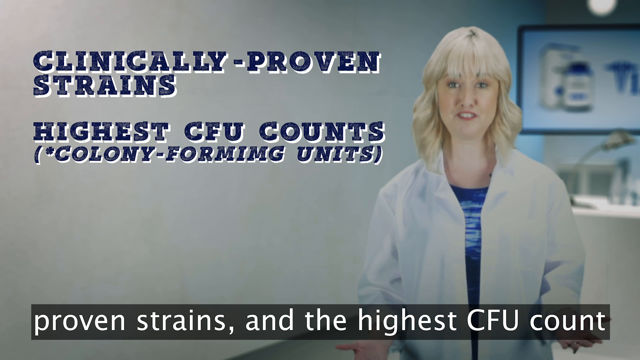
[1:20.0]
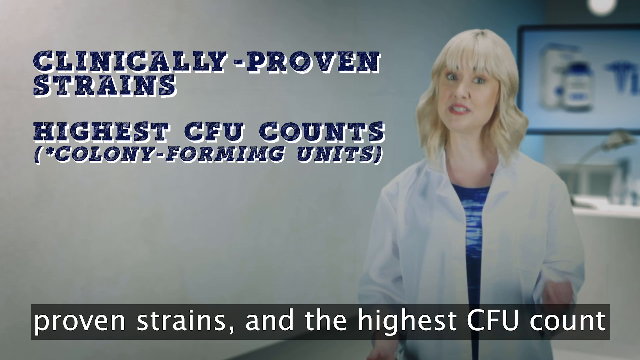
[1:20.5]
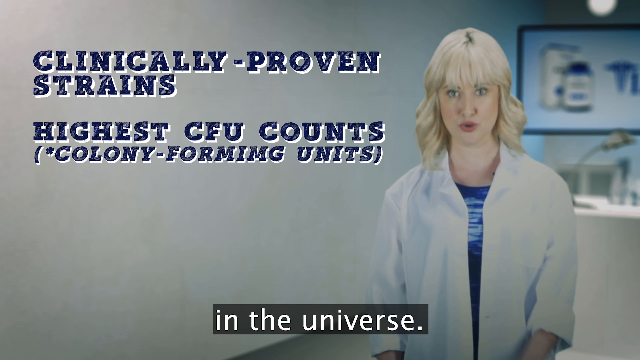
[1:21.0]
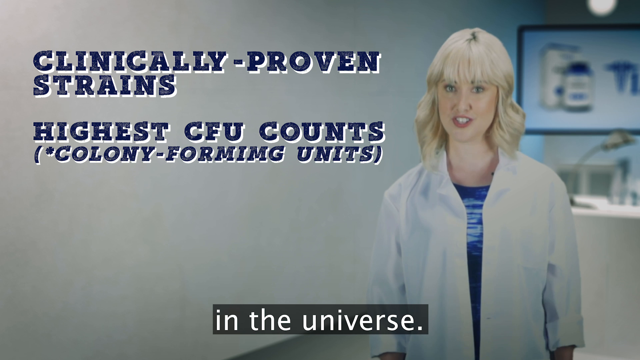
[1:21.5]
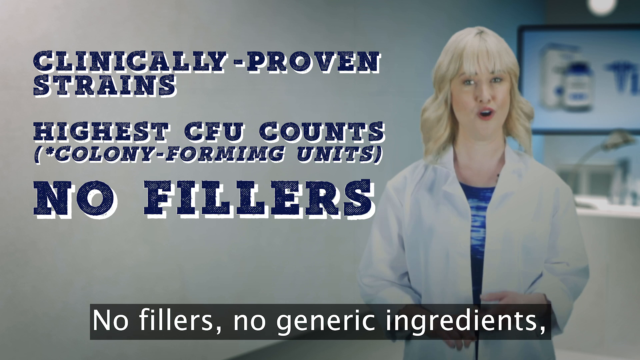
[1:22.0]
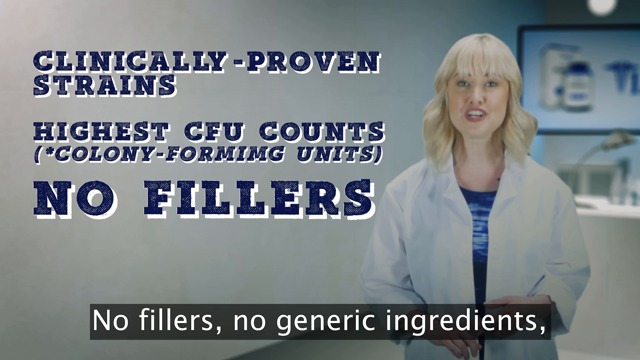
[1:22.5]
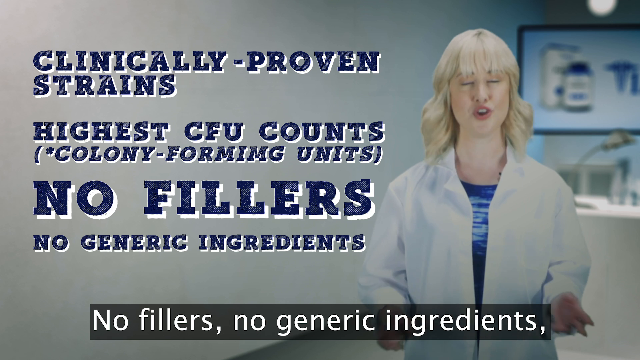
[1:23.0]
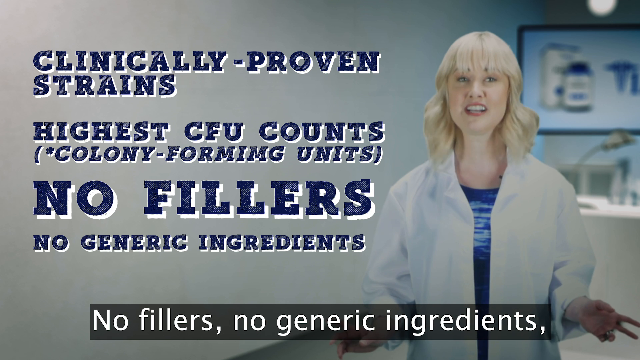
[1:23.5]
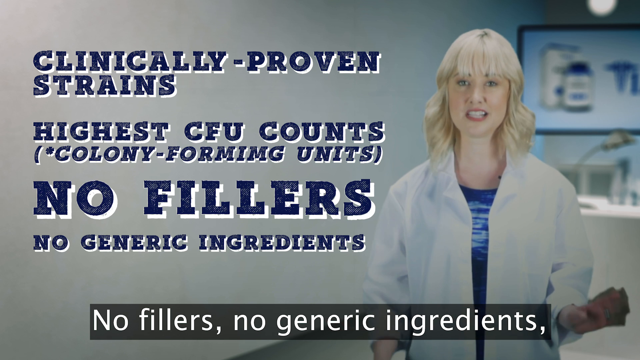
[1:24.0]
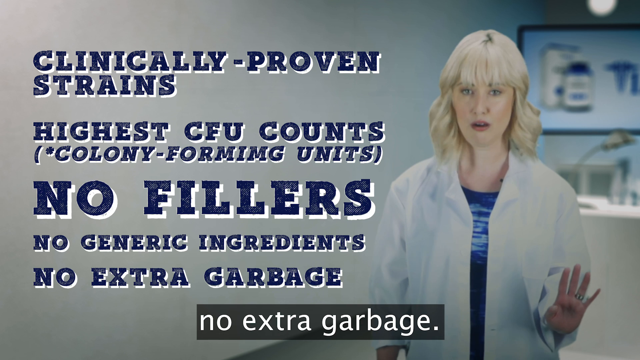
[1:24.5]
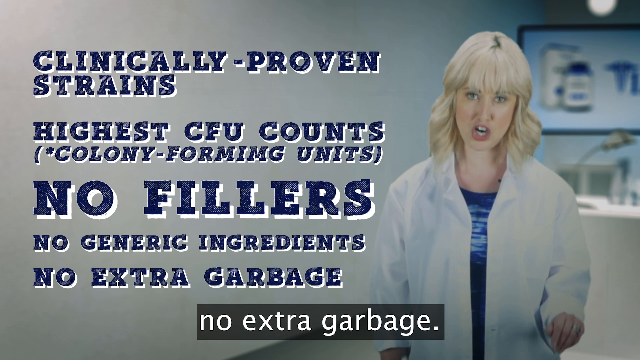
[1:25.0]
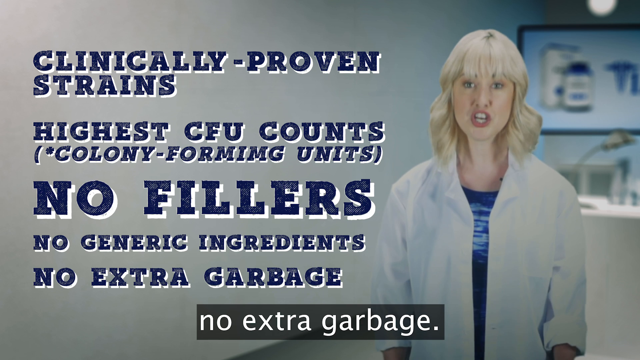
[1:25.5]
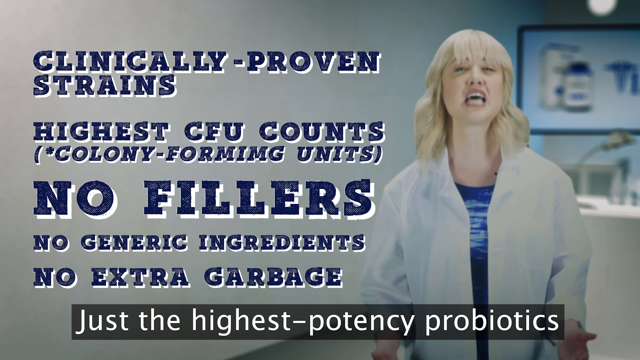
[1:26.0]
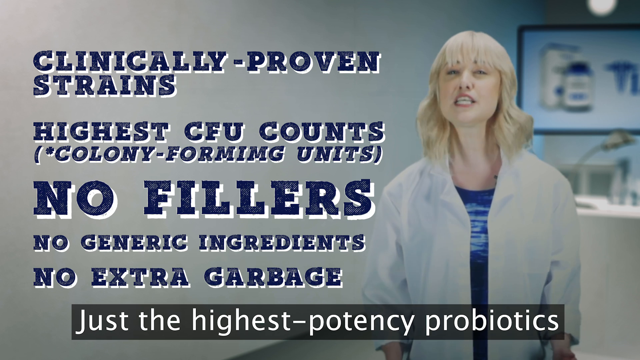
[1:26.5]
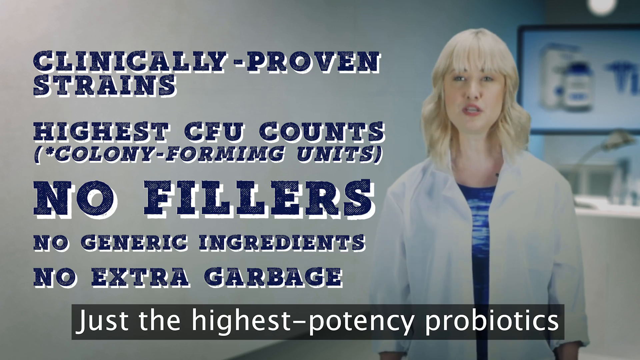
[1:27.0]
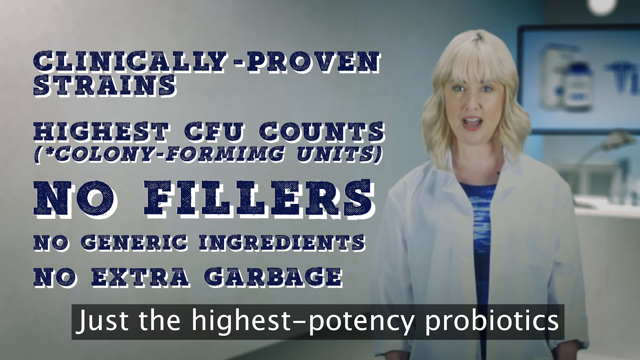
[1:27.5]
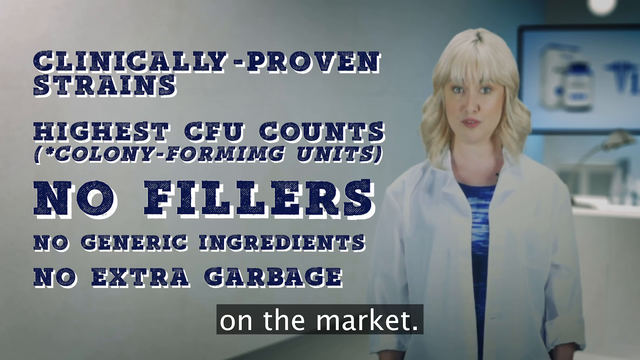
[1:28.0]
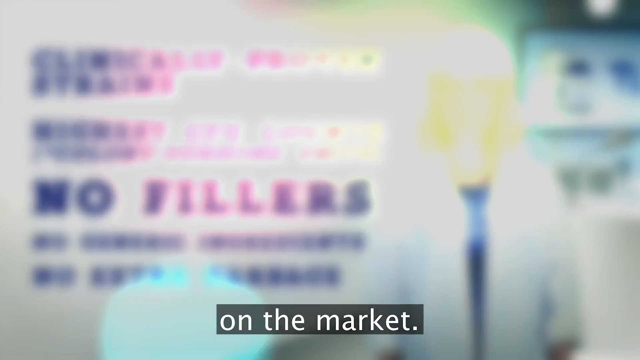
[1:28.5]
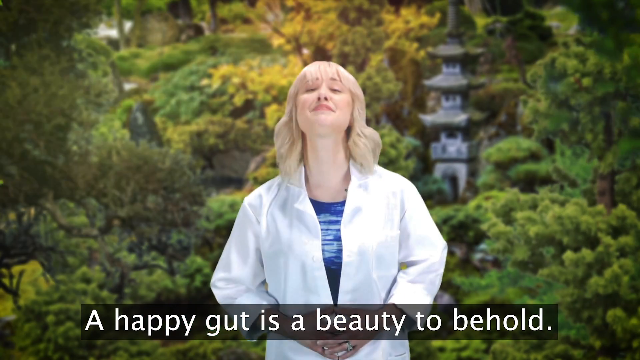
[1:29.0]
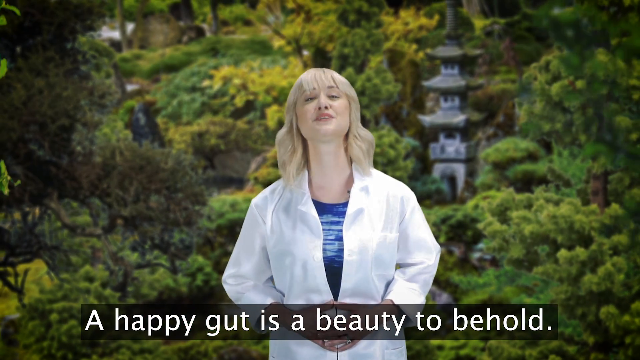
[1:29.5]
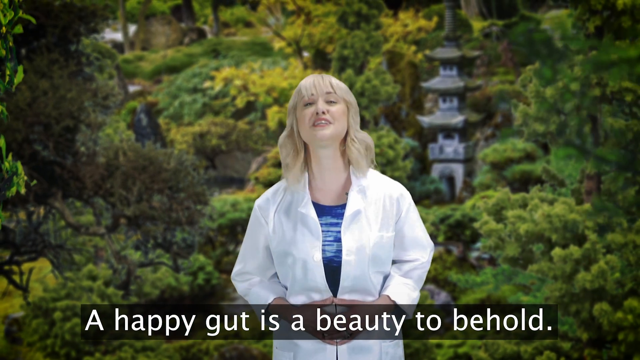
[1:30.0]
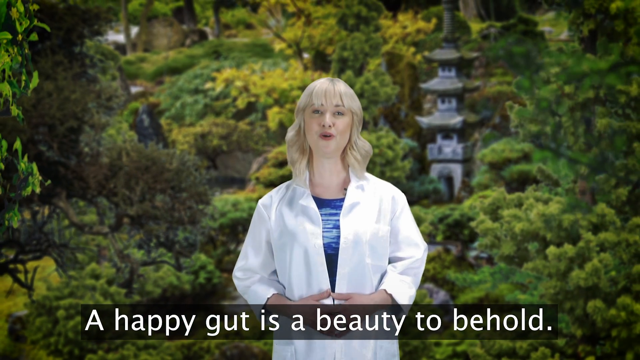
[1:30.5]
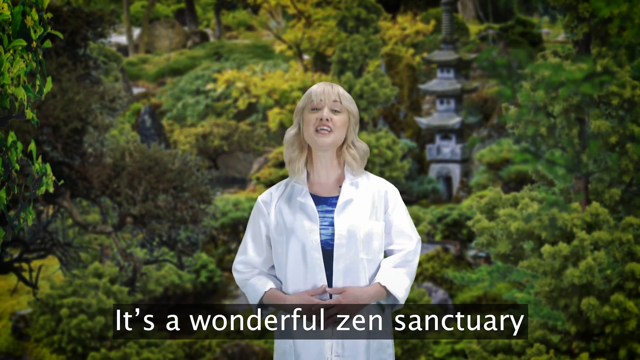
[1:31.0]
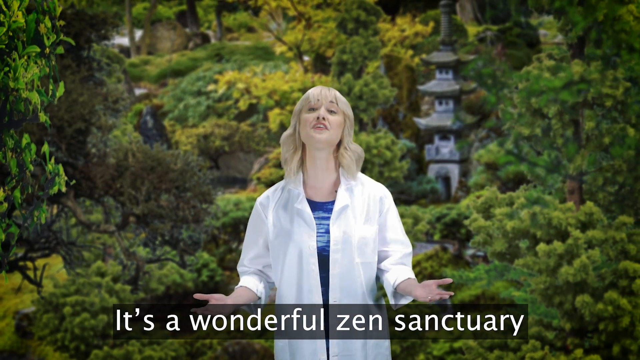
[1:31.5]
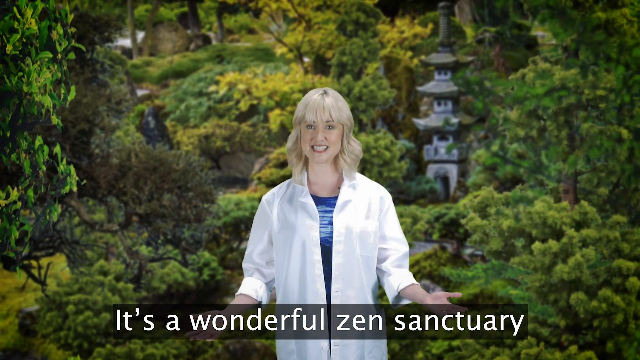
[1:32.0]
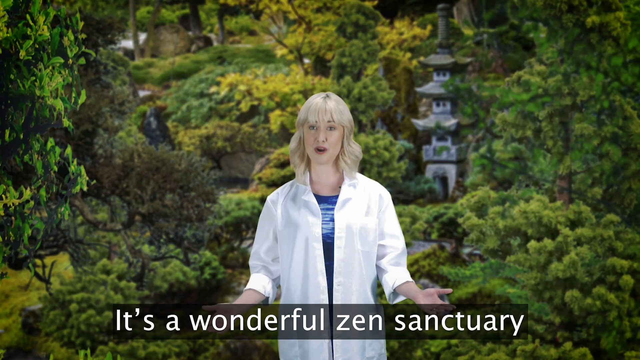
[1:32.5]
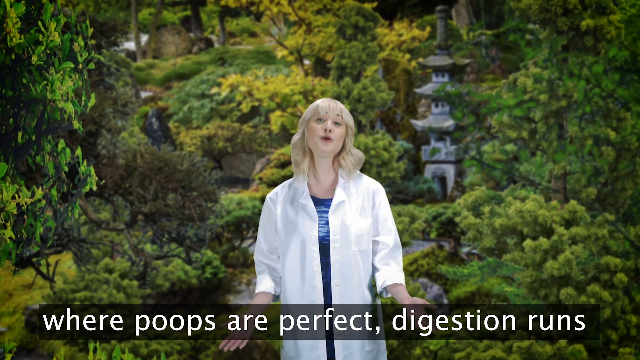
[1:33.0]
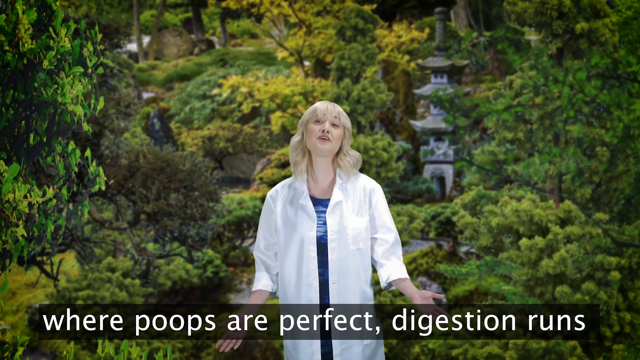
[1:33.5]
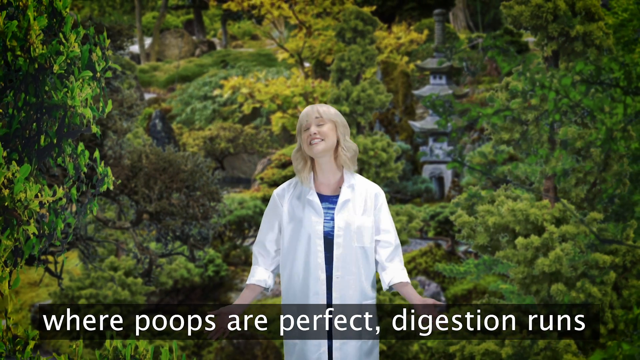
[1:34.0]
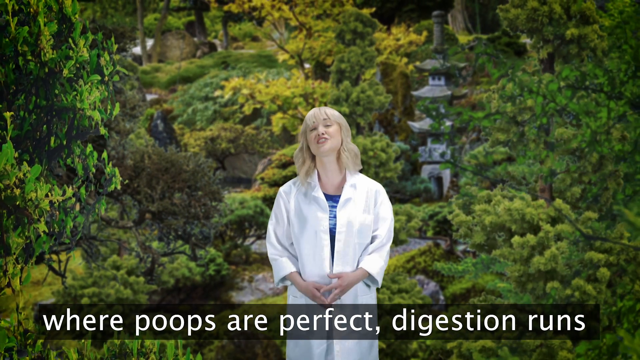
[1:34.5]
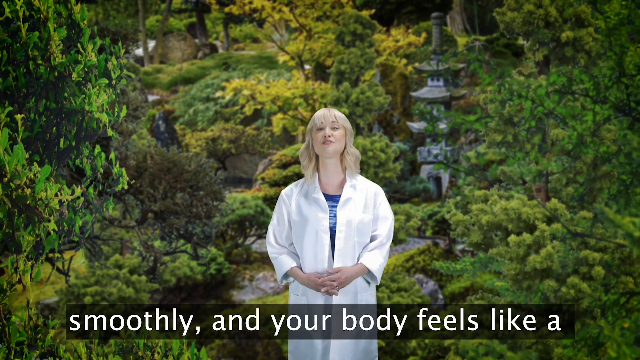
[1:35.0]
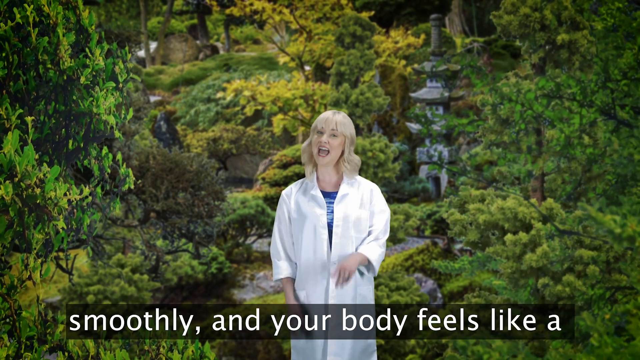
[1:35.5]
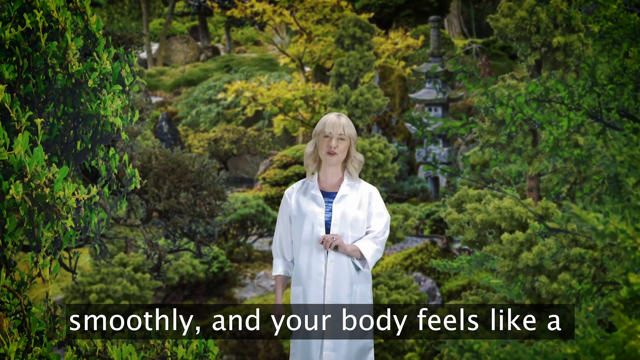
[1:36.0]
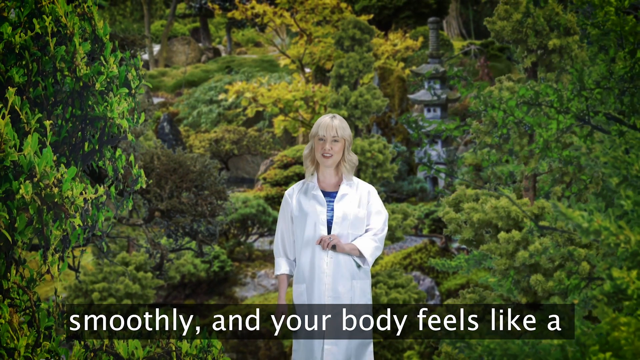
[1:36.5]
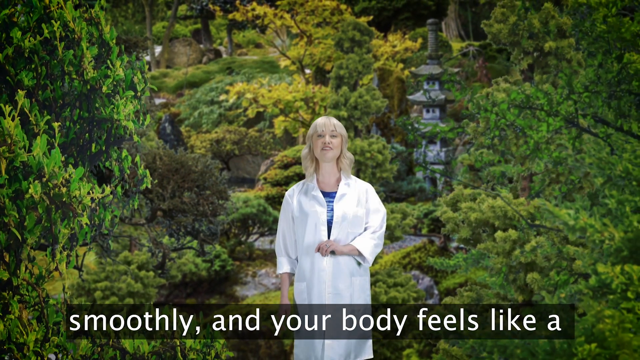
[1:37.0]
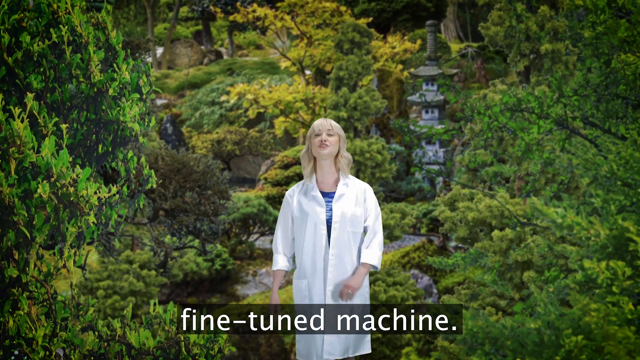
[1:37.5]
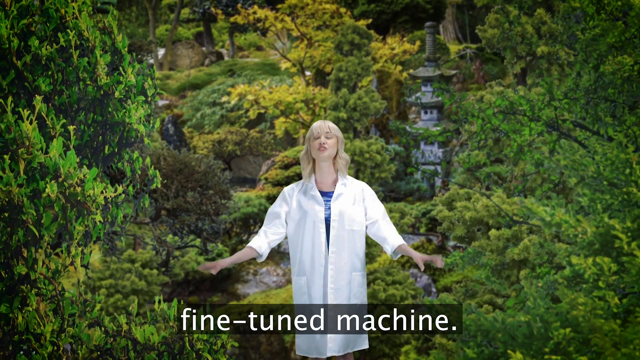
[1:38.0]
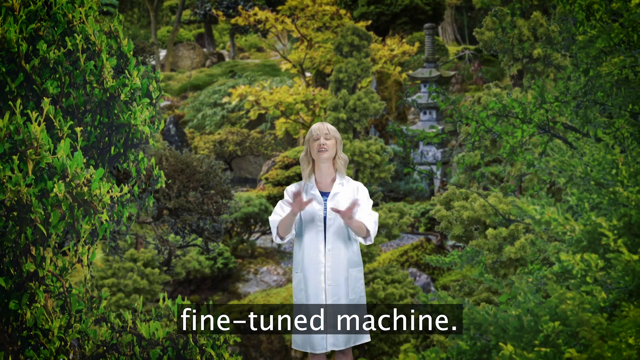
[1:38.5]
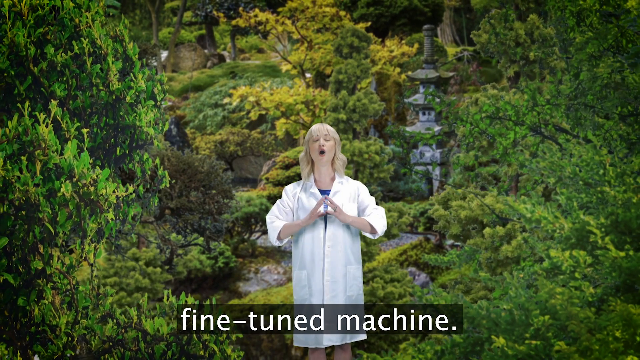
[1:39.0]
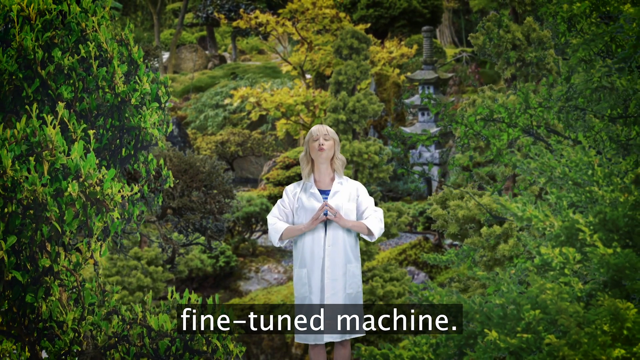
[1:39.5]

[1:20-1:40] The woman in the white lab coat, with blonde hair, stands in a lab. Text reads "clinically proven strains, highest CFU counts", with "colony forming units" in brackets, as she moves her hands together and apart in a persuasive gesture. Text then reads "no fillers, no generic ingredients and no extra garbage" as she continues talking with enthusiasm on her face. The scene changes to a Buddha temple with trees in the background, giving the appearance of a very serene and pleasant environment, while she gestures wildly with her hands, palms up. She points at the camera several times, waves her palms in a circular manner, and puts her fingers together in front of her chest. The scene ends with her looking very pleased with herself.